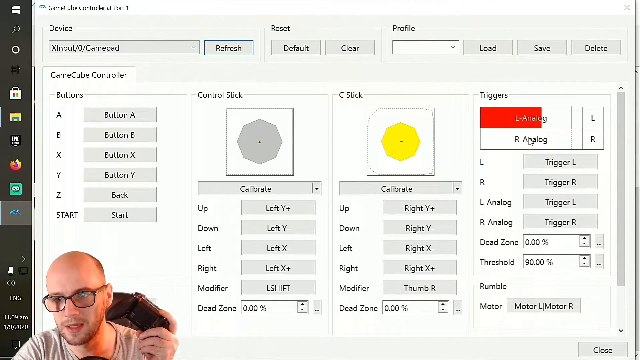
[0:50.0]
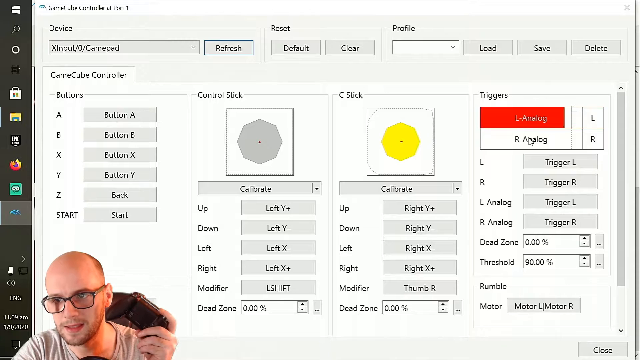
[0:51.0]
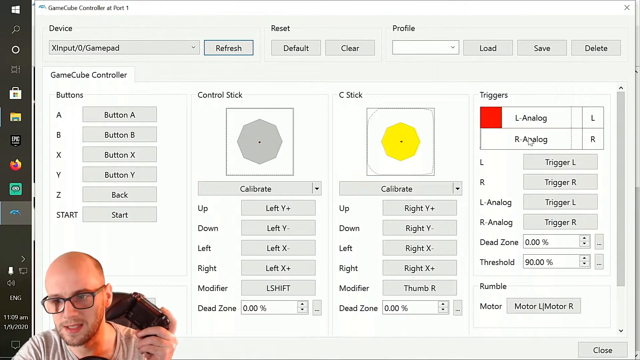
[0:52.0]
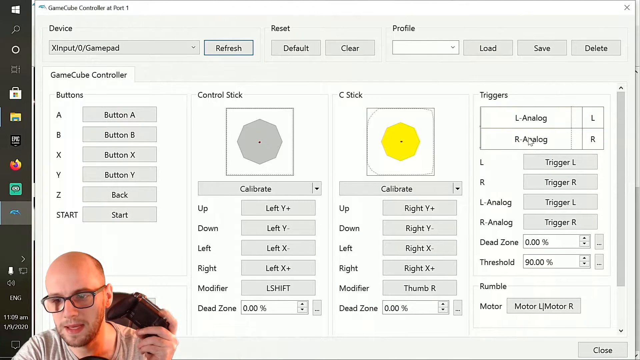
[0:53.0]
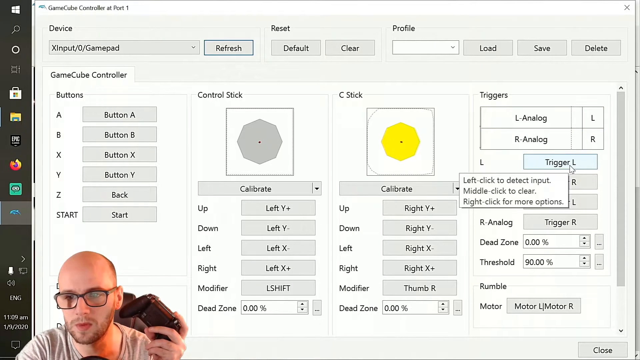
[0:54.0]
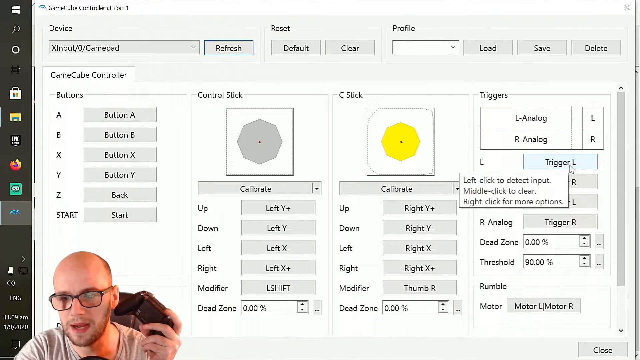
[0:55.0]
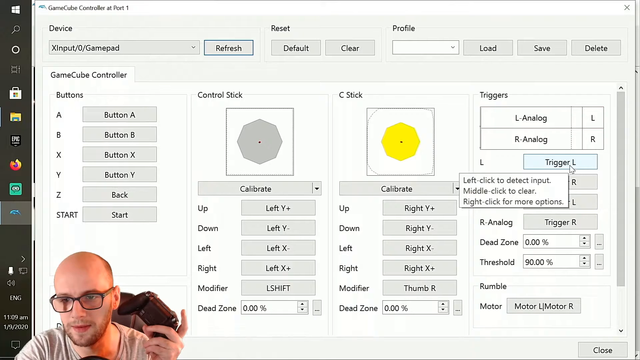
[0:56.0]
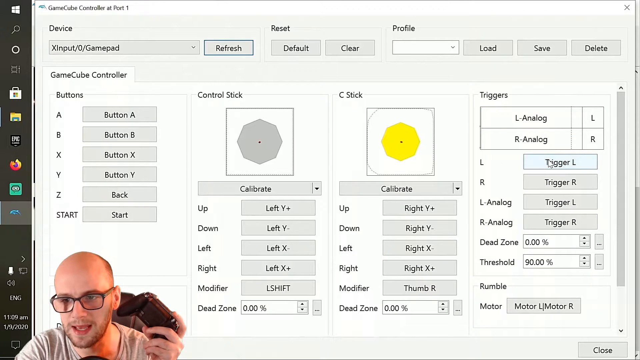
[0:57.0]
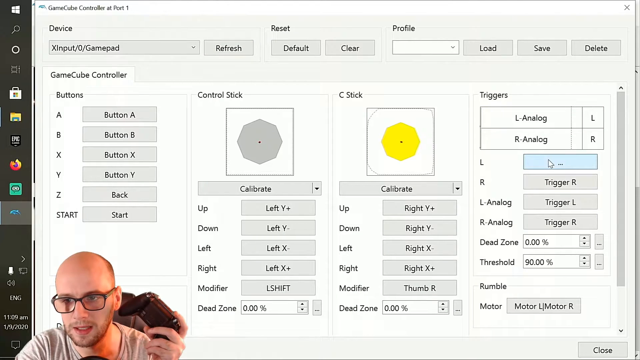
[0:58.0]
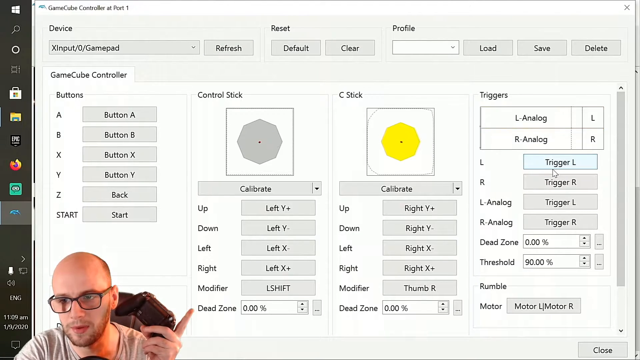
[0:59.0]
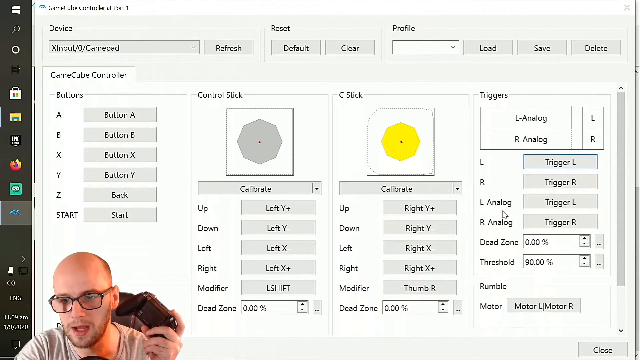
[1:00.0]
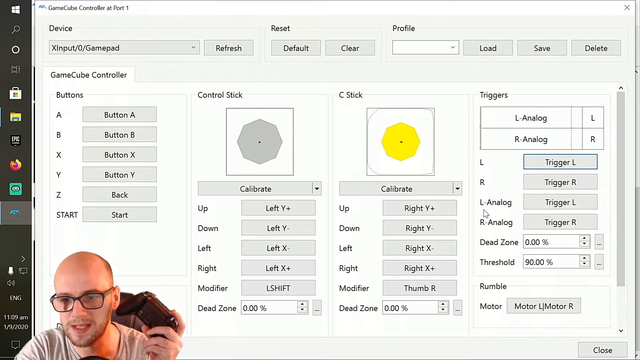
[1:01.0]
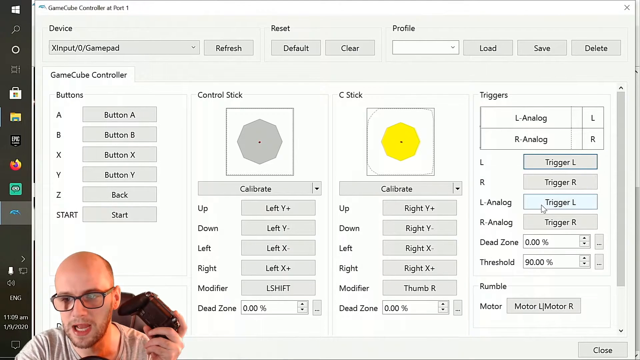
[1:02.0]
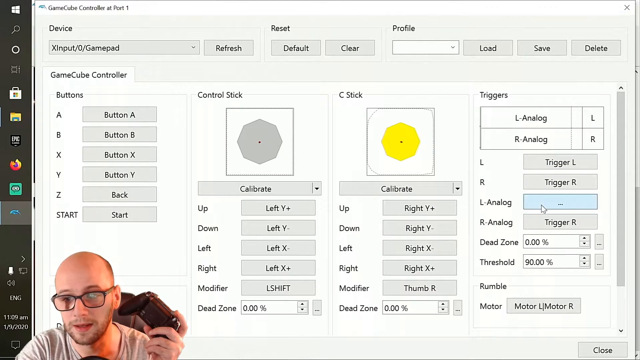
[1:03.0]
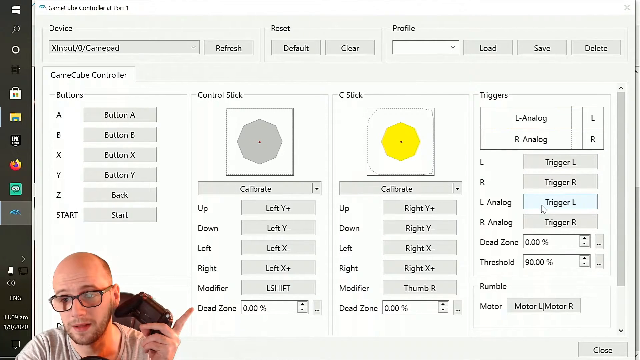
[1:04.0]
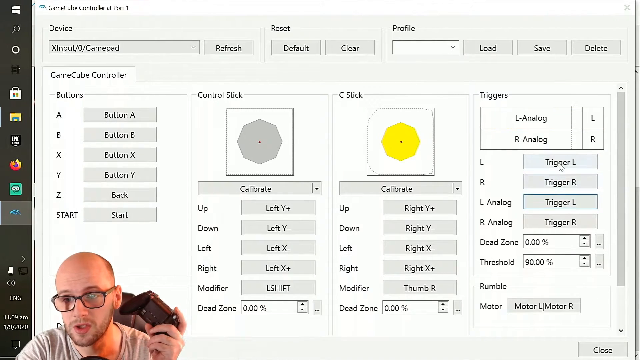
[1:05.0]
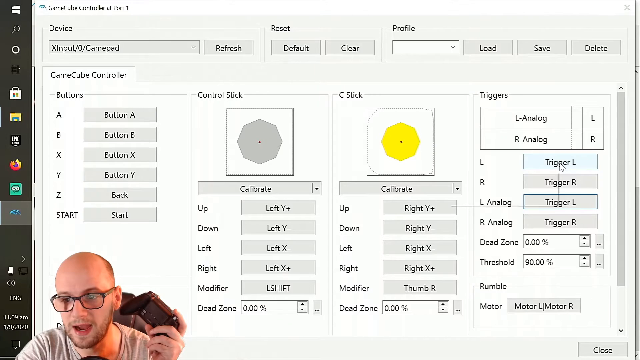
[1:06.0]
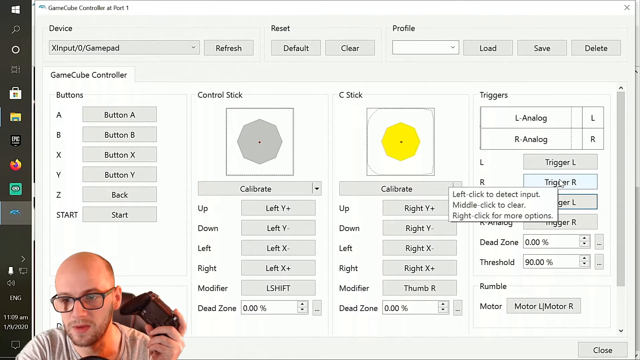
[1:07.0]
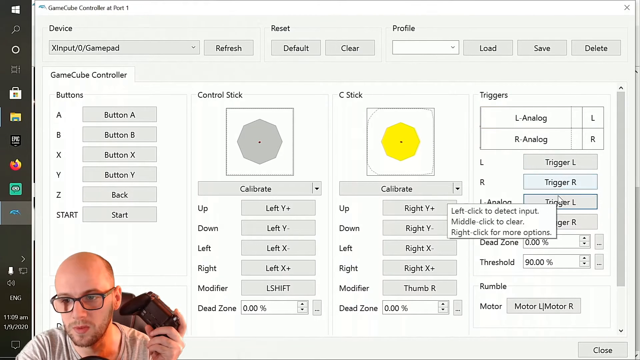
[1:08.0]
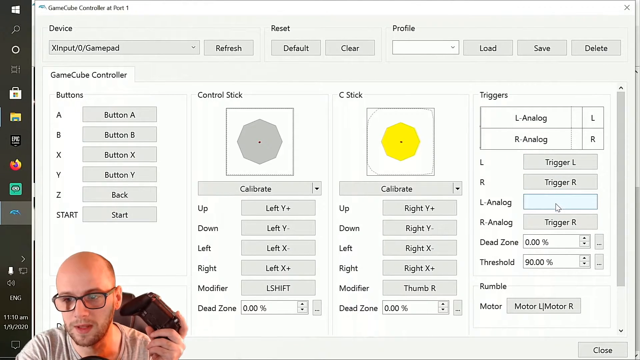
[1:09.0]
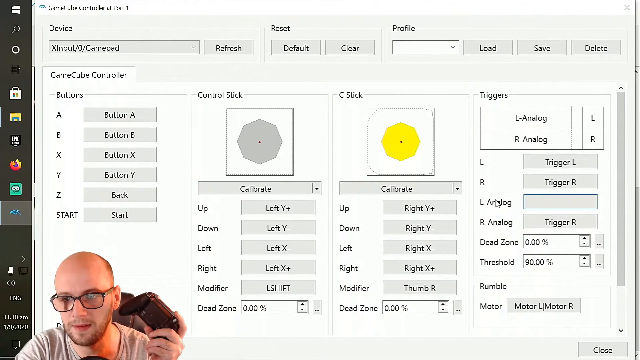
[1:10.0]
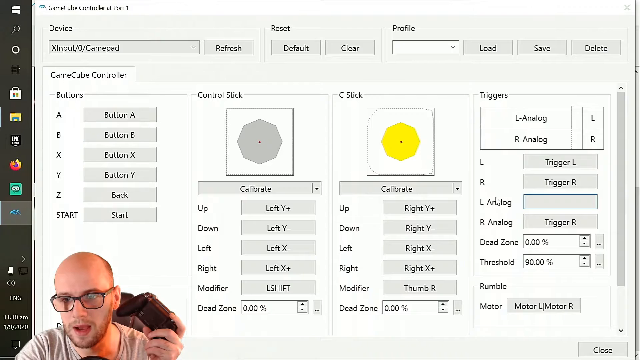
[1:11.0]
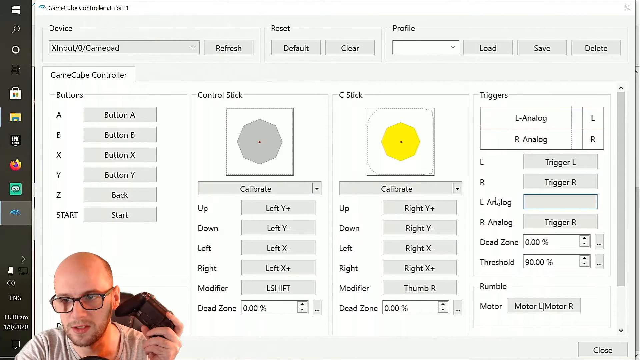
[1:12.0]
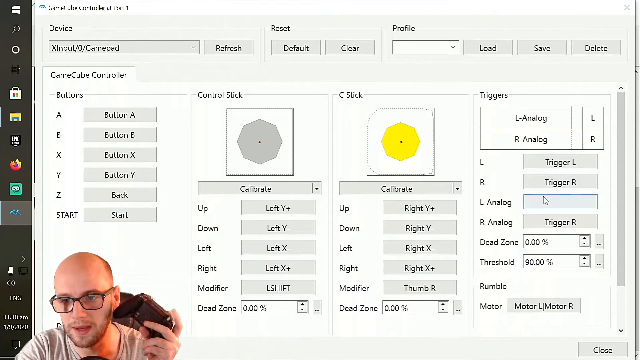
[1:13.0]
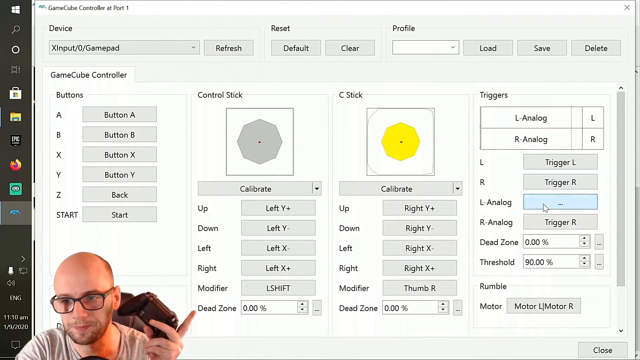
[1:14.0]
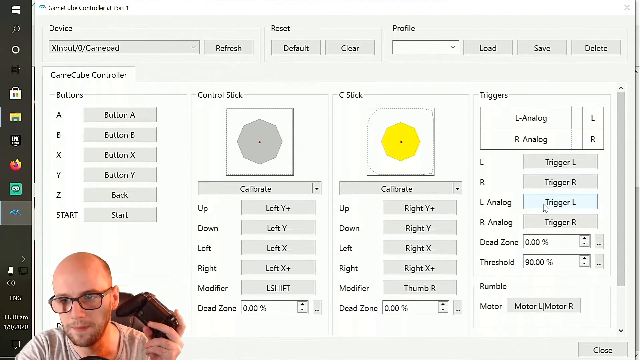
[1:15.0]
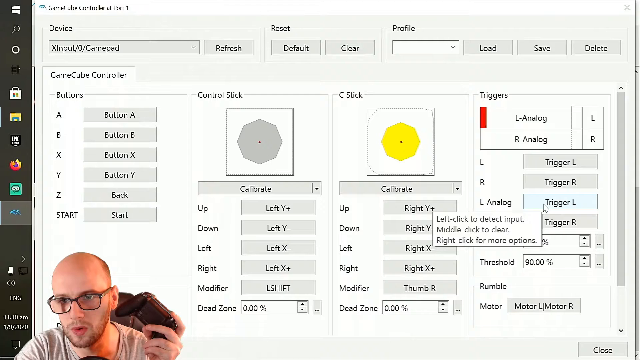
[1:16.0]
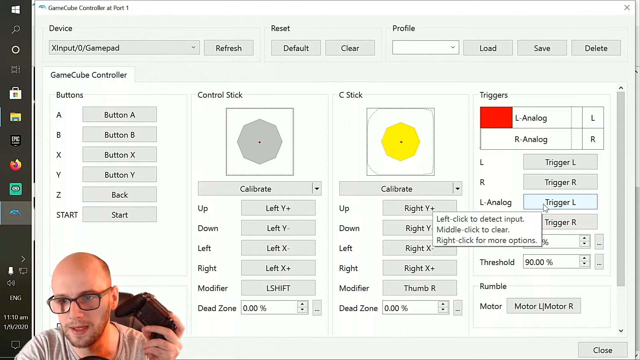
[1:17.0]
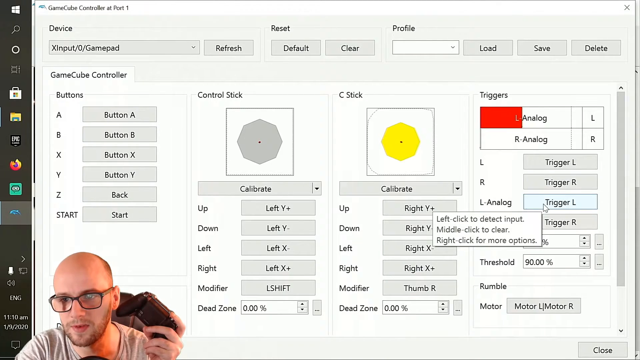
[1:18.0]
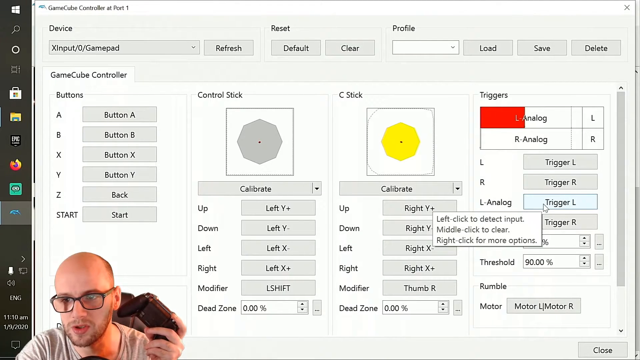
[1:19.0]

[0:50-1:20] The man is in the lower left-hand corner, with only the top of his bald head and his black-rimmed glasses visible; he is Caucasian. He shows himself pushing a button on a black Xbox controller, which lights up a red area on the screen where it says "L analog". He then adjusts it, making it the L analog trigger at the bottom. While talking, he moves his finger very fast, left, right, left, right, hitting the button, and each time the screen lights up red in that area. It is his controller, connected to that section, making the screen light up rather than the mouse. The L analog area is kind of like a red rectangle that fills up from the left all the way to the right; when he takes his finger off it goes back to zero, and it fills up again every time he pushes the button.